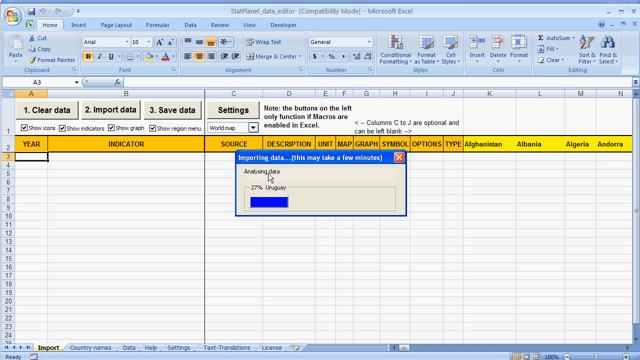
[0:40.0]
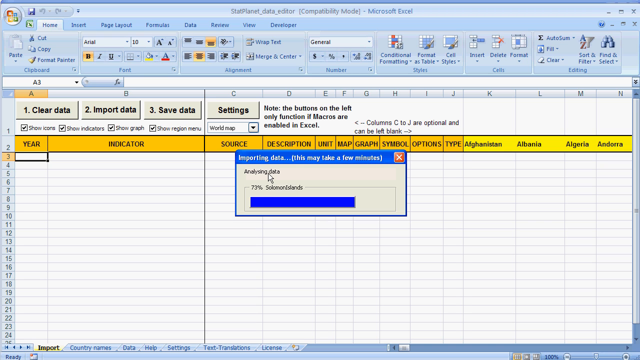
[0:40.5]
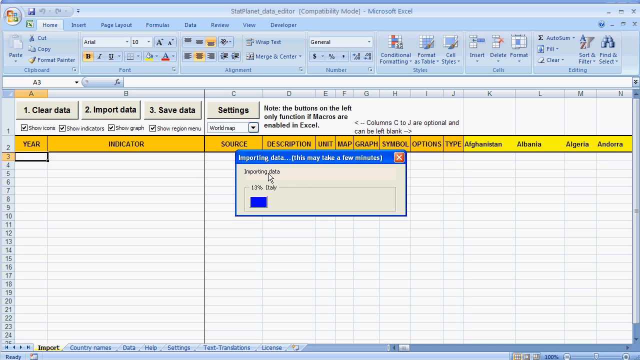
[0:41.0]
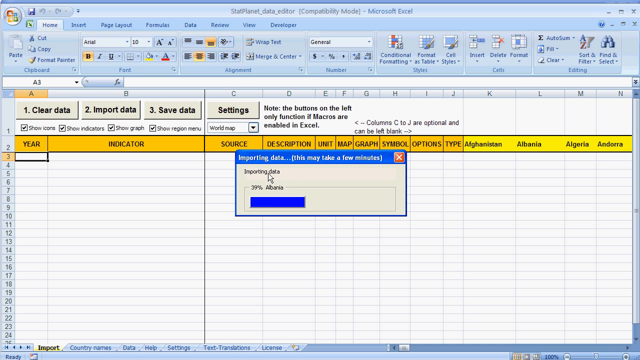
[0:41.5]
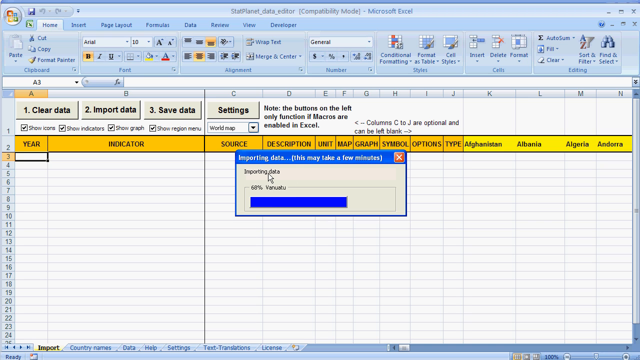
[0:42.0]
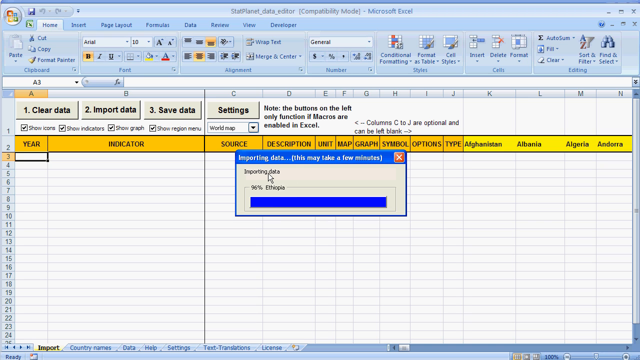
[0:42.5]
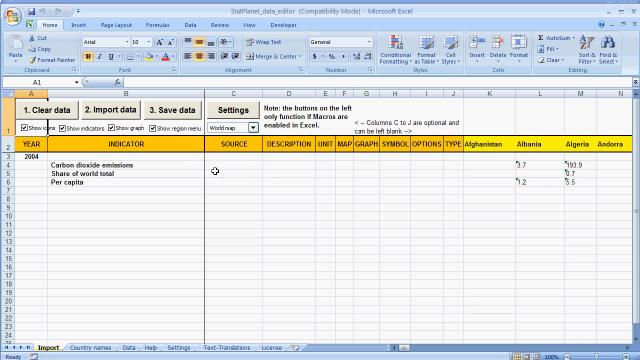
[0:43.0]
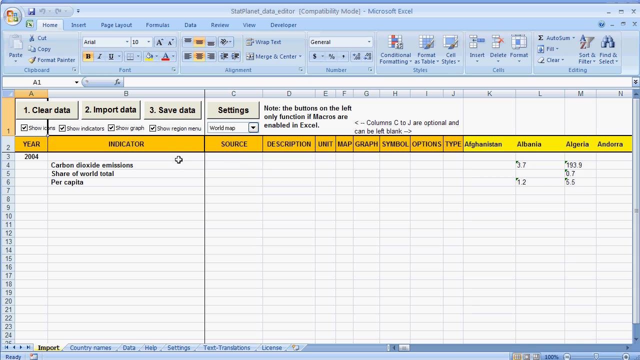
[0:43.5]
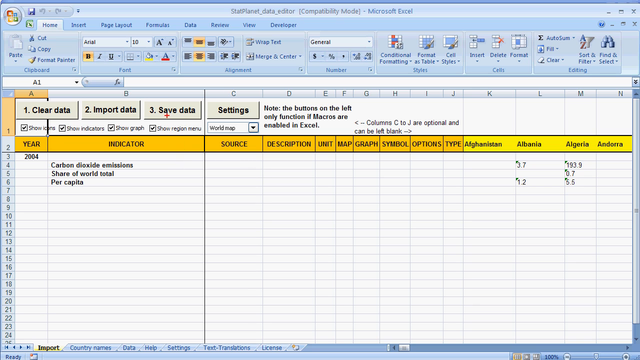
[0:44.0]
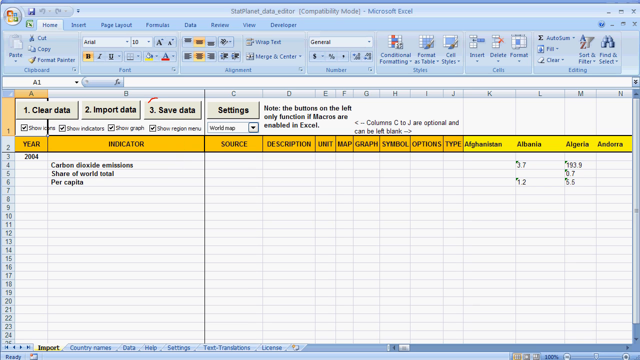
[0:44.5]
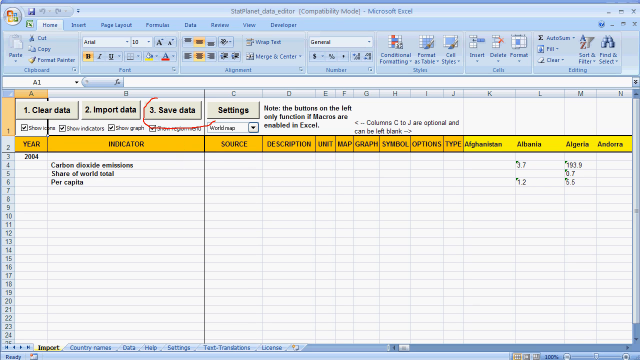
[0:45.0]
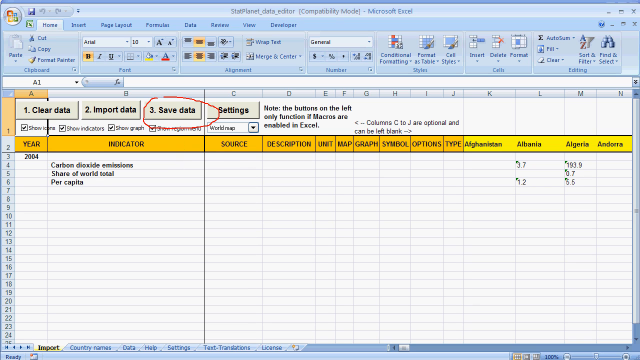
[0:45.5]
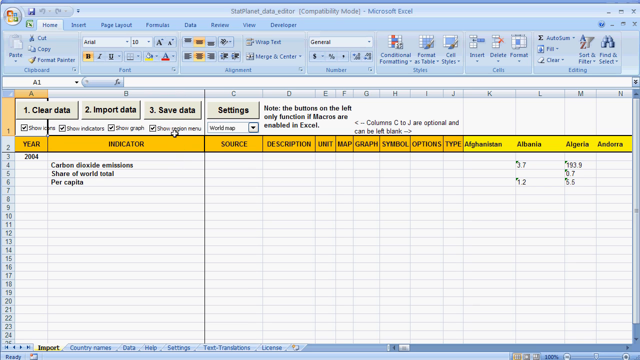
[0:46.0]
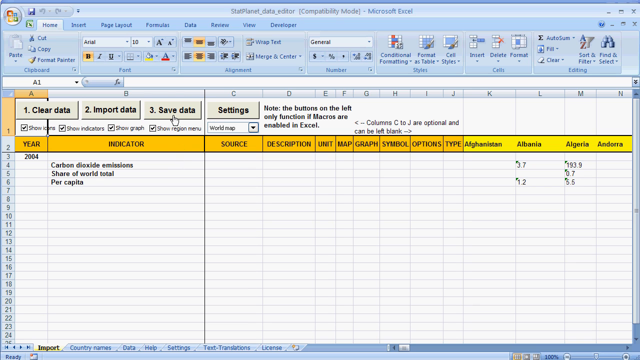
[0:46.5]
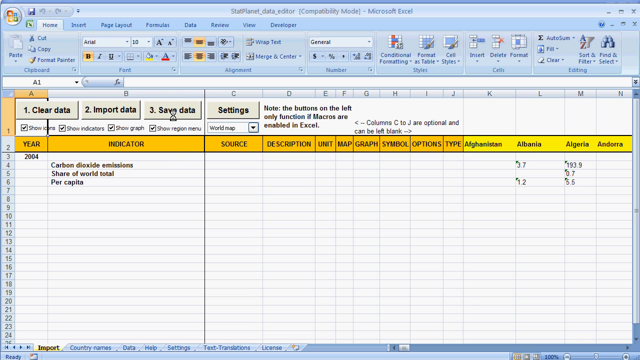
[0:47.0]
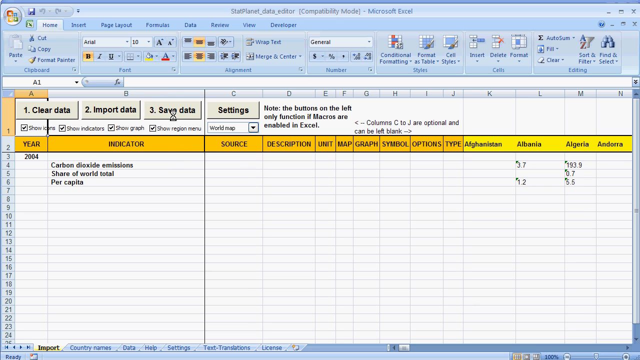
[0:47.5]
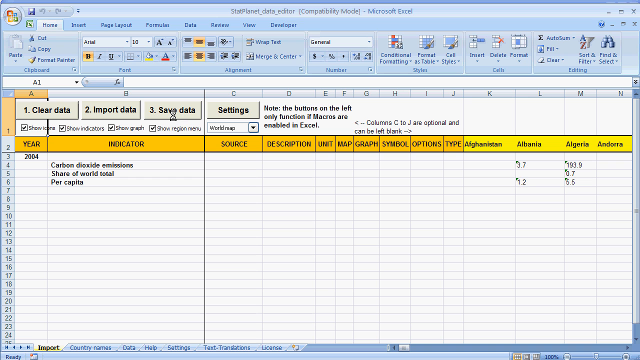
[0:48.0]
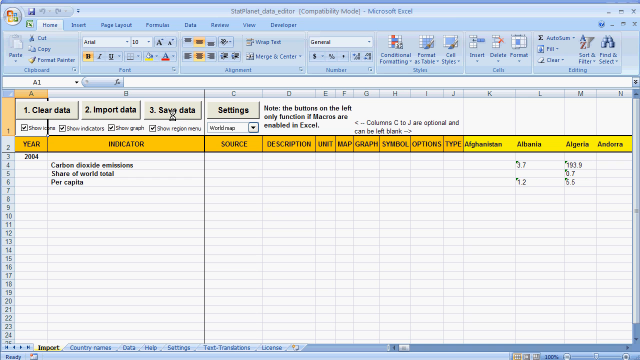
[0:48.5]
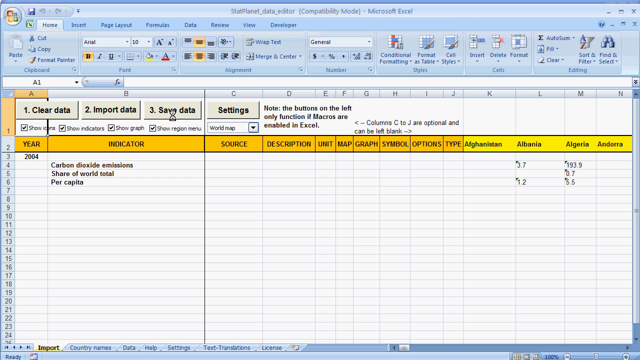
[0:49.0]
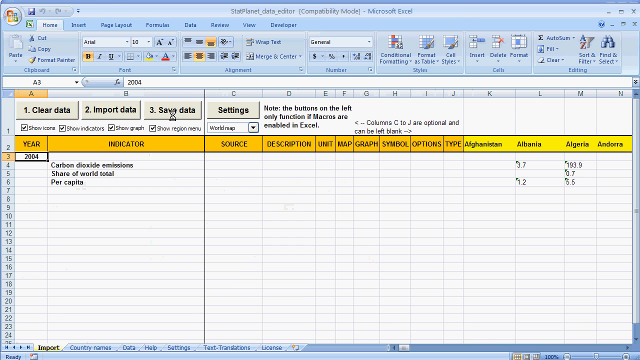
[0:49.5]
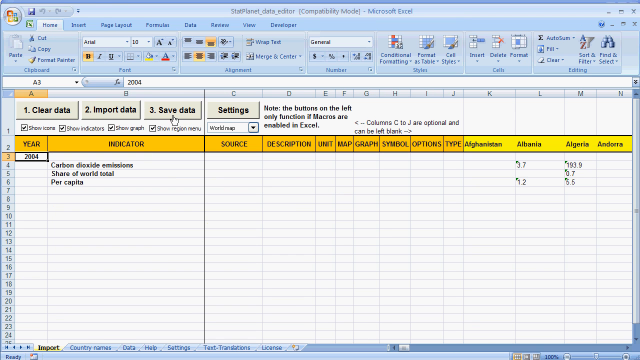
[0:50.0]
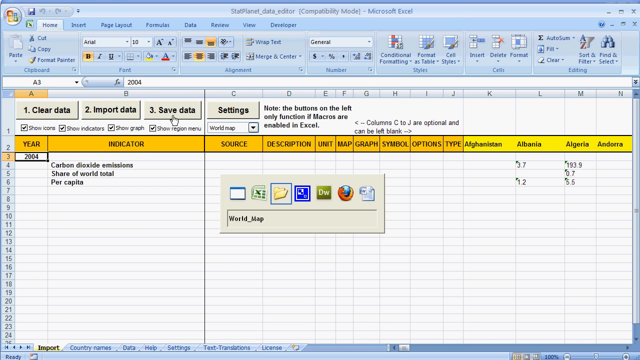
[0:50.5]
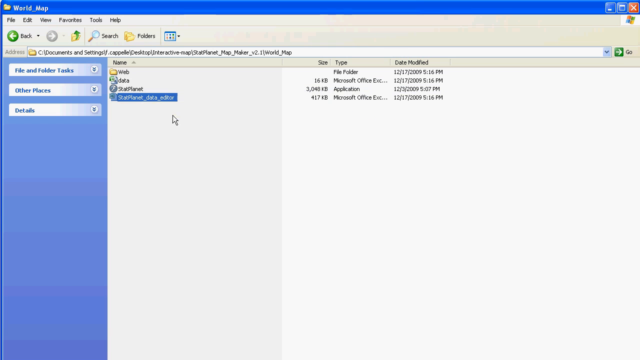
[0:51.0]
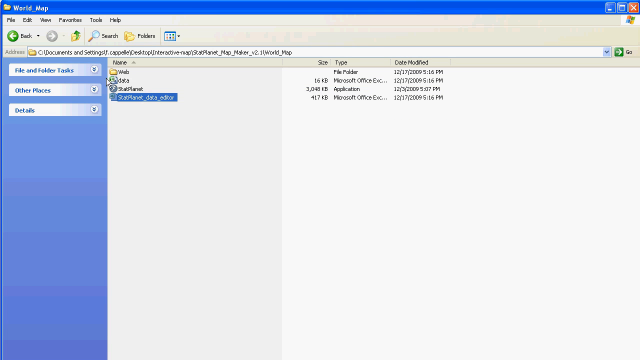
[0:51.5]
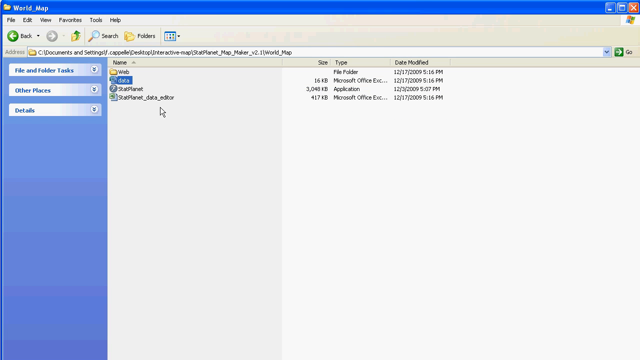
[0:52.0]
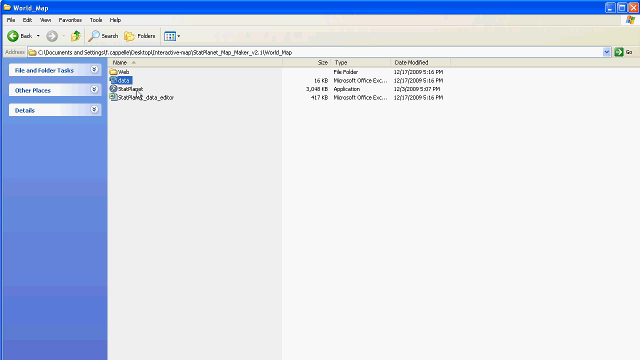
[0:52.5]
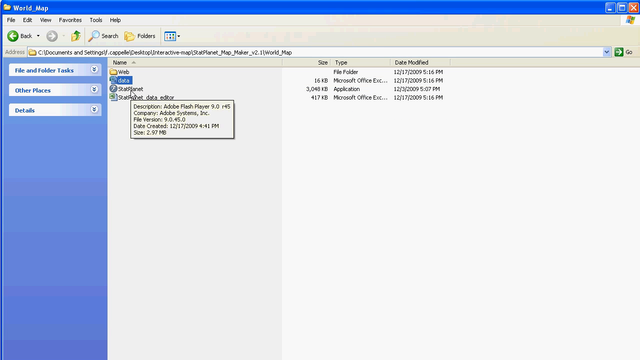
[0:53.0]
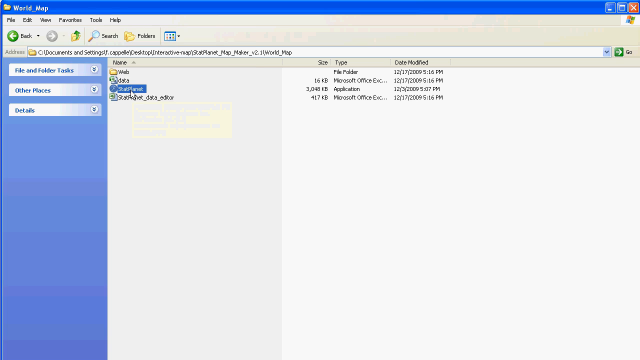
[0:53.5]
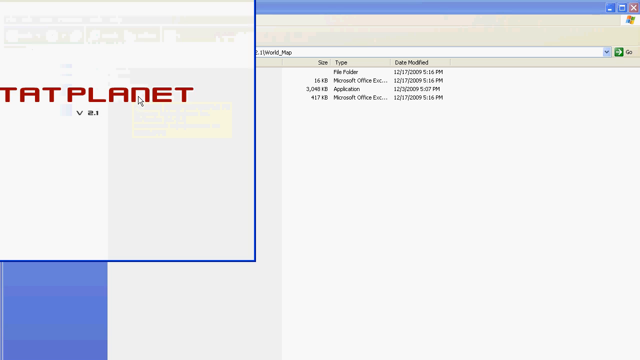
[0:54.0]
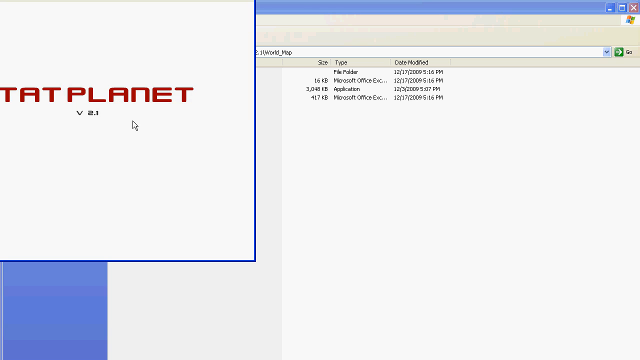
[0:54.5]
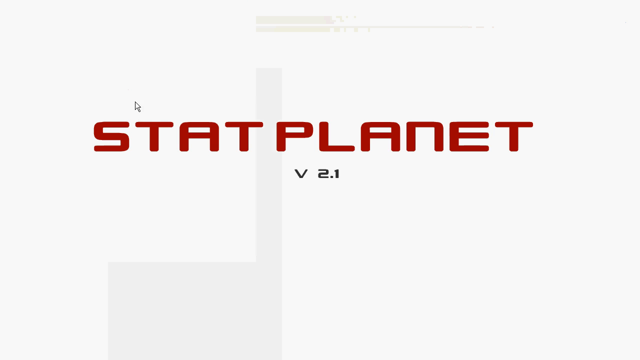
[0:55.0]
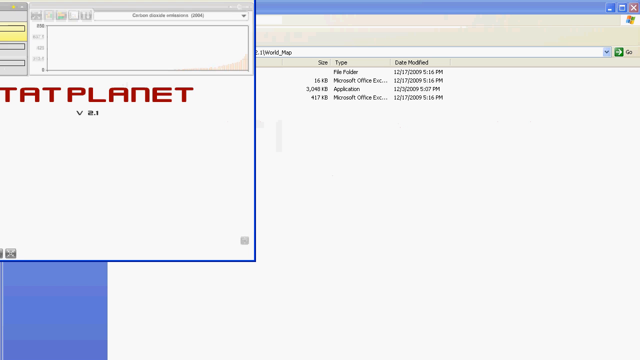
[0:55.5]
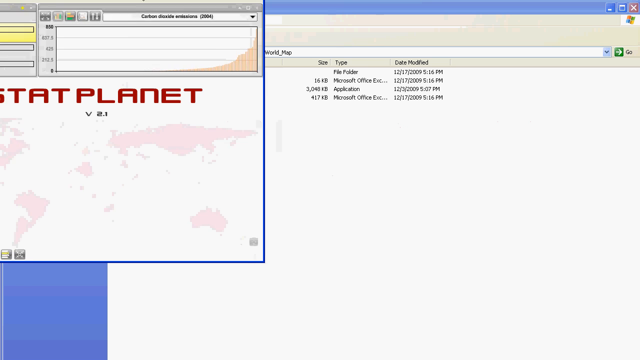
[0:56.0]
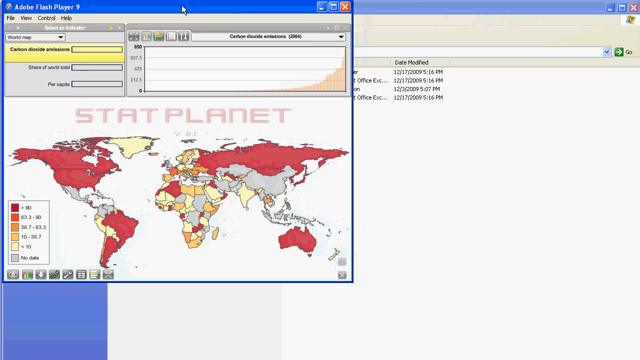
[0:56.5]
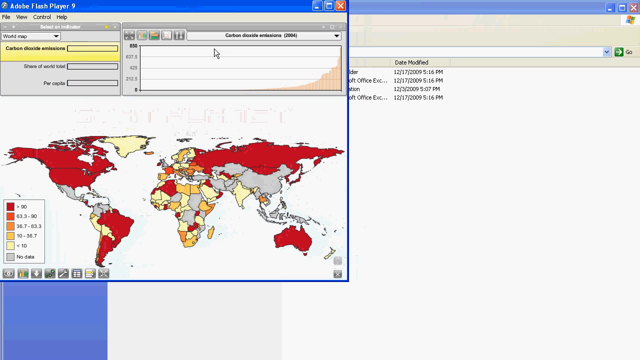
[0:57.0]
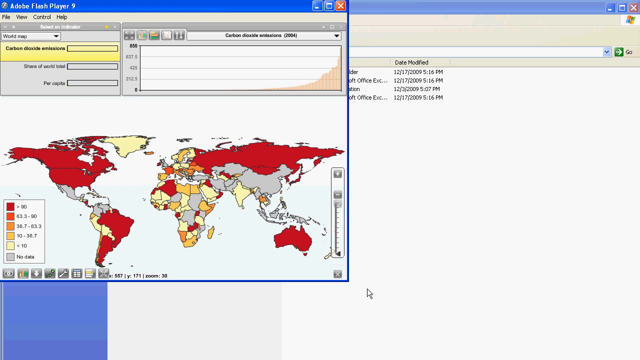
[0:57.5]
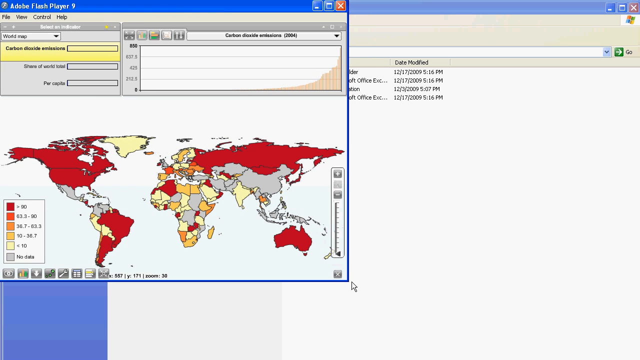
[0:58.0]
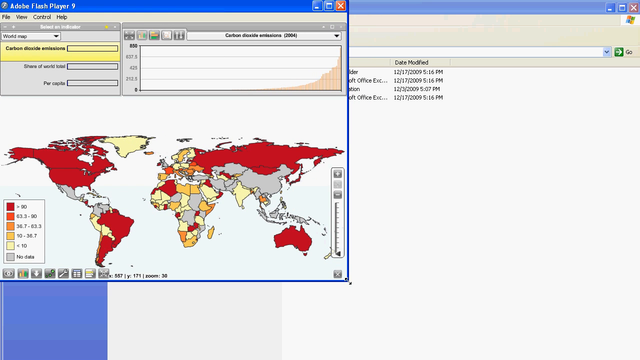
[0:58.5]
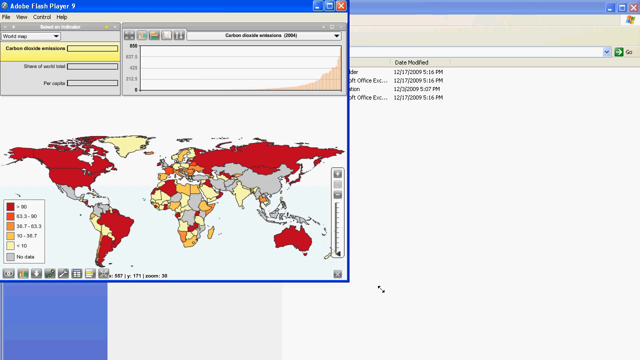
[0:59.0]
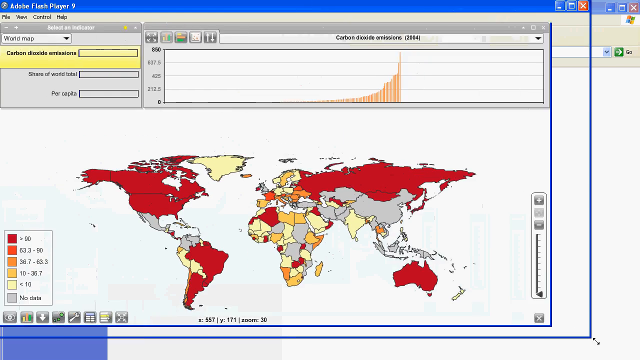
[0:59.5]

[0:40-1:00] After the files are imported, the data is saved to a statistical file called stat planet. A pop-up window then opens showing a picture of the globe with countries highlighted in red from the data set. A file folder is clicked. Most of the United States is red, South America is red, and a lot of the European nations are red. Some areas are highlighted in yellow, apparently somewhere in Asia.